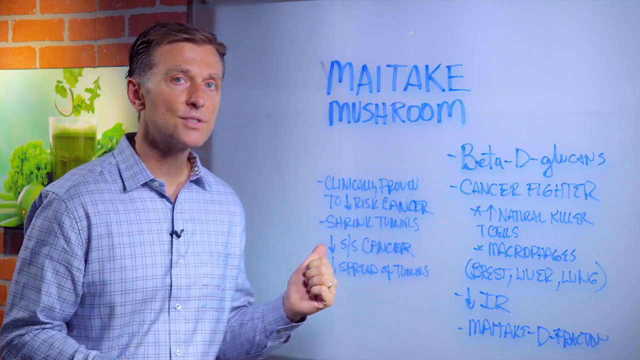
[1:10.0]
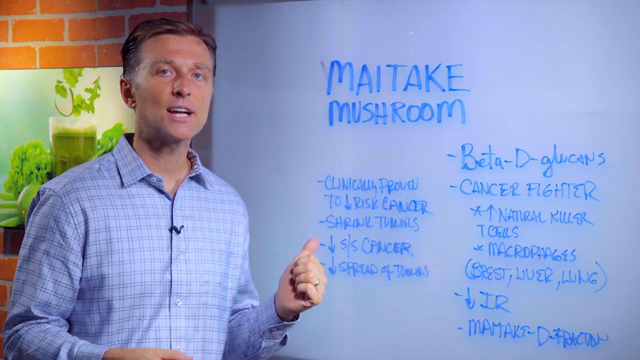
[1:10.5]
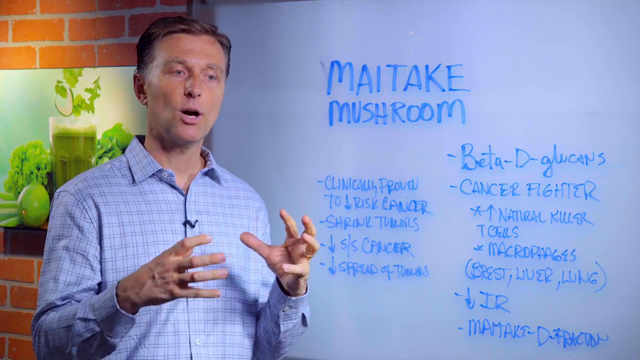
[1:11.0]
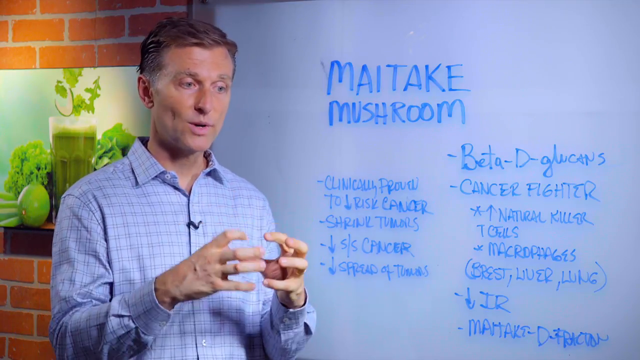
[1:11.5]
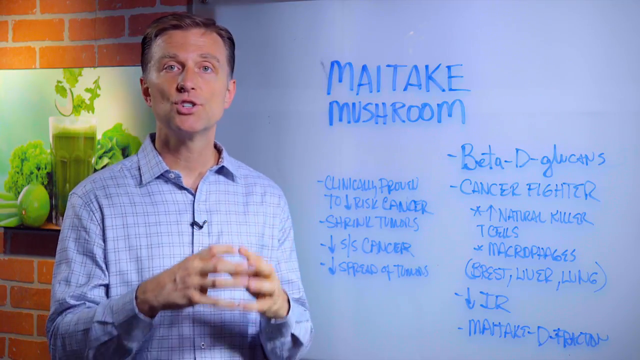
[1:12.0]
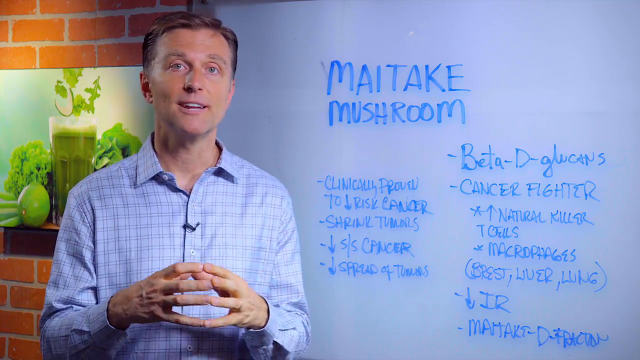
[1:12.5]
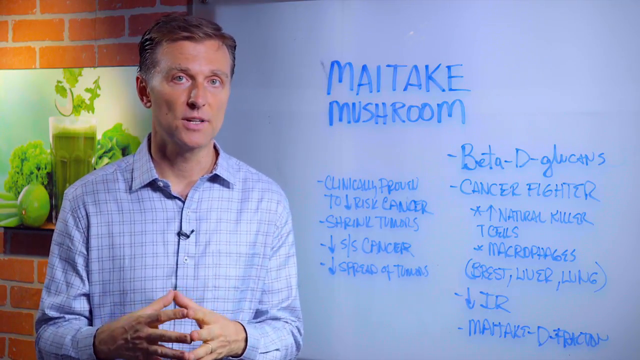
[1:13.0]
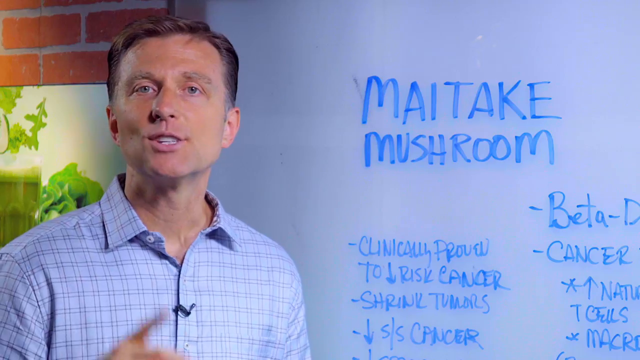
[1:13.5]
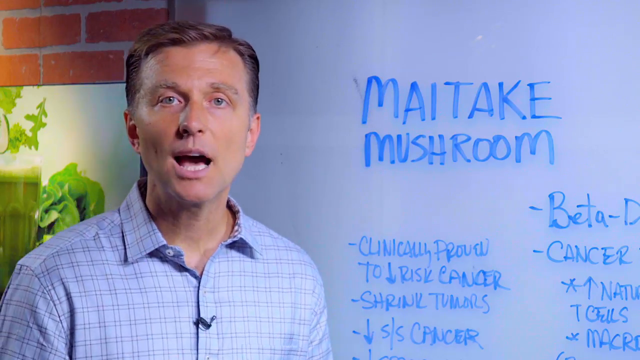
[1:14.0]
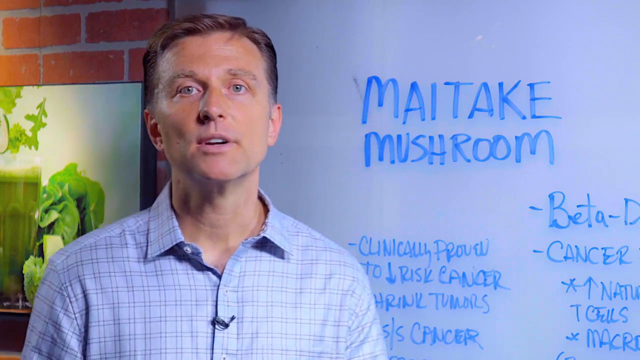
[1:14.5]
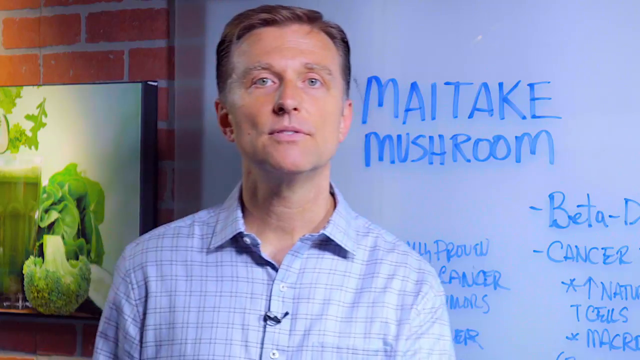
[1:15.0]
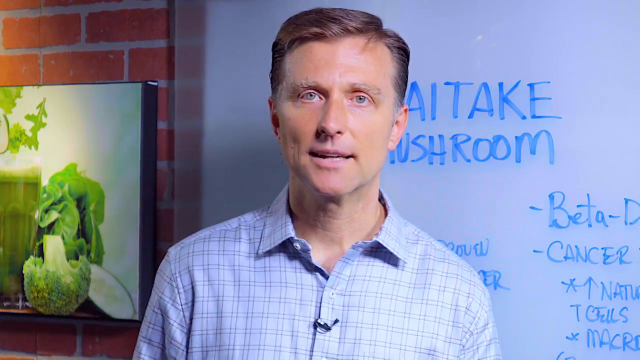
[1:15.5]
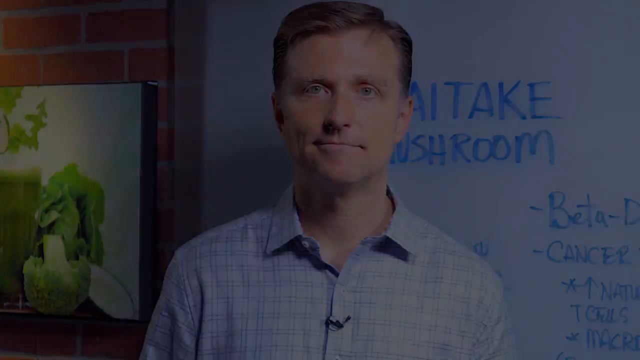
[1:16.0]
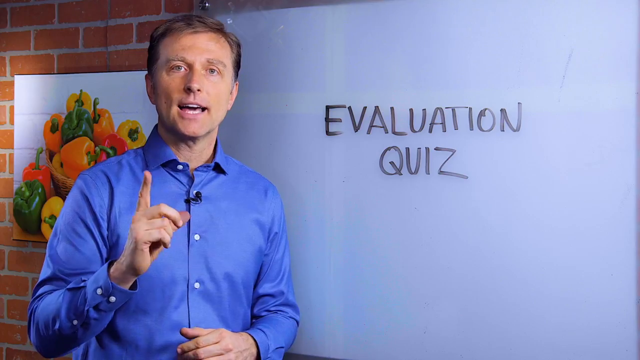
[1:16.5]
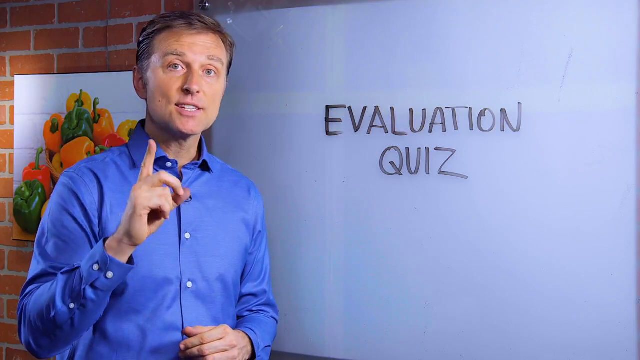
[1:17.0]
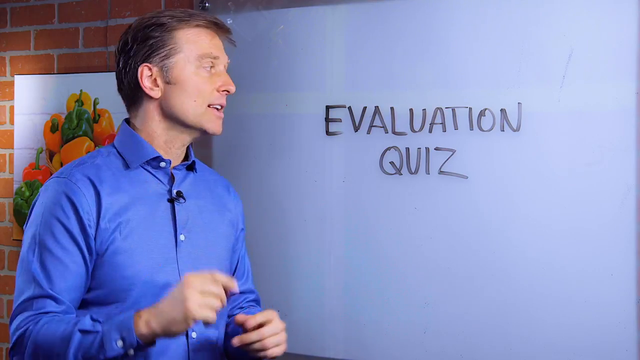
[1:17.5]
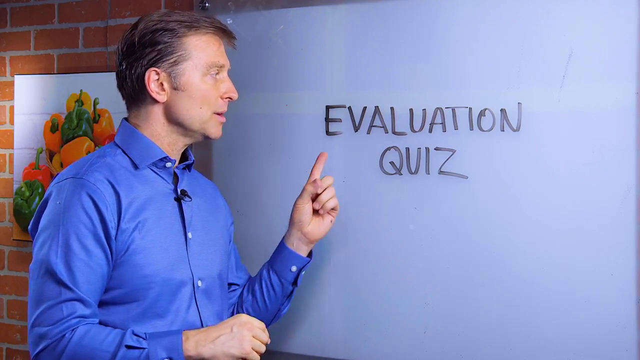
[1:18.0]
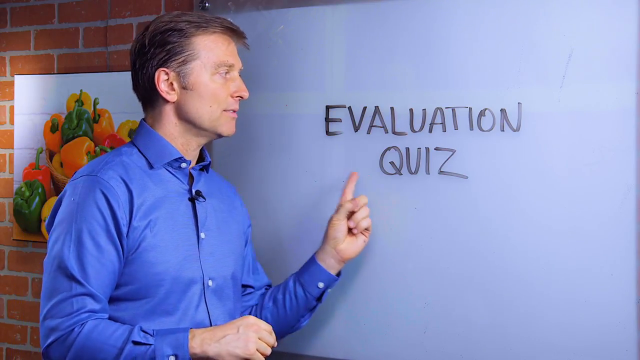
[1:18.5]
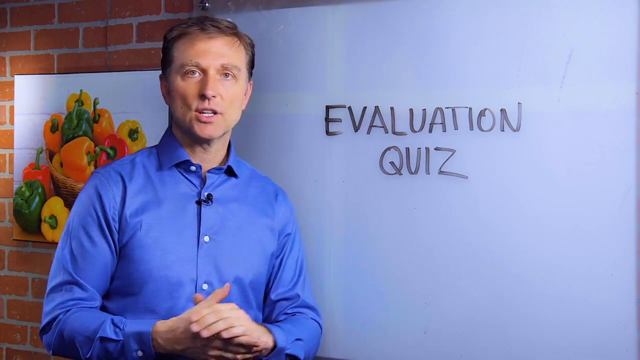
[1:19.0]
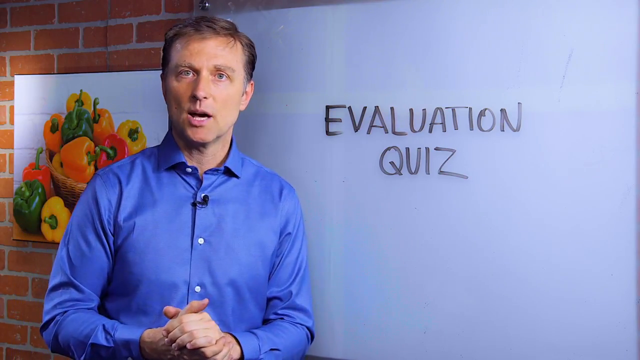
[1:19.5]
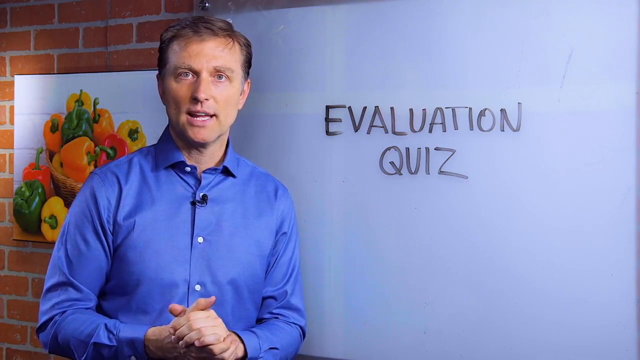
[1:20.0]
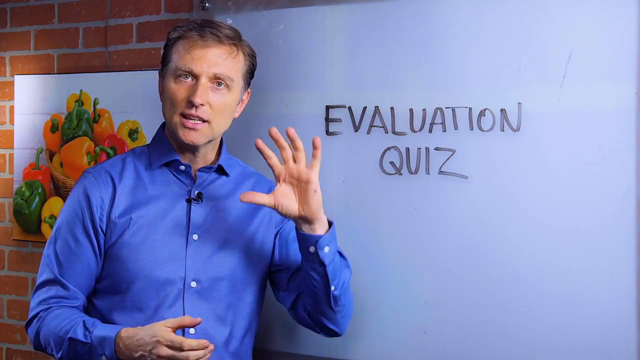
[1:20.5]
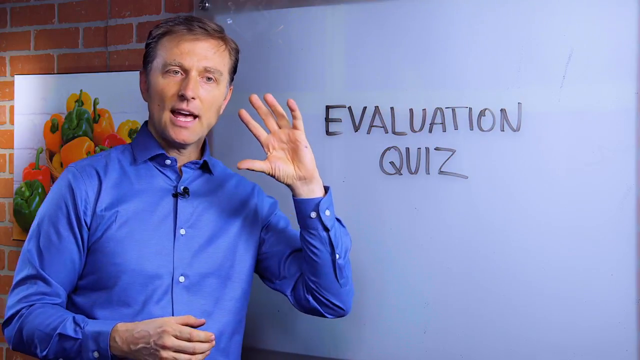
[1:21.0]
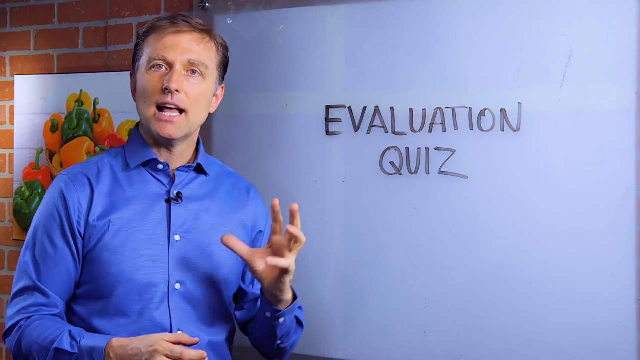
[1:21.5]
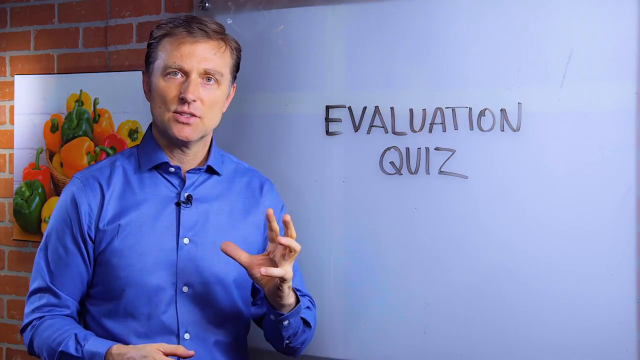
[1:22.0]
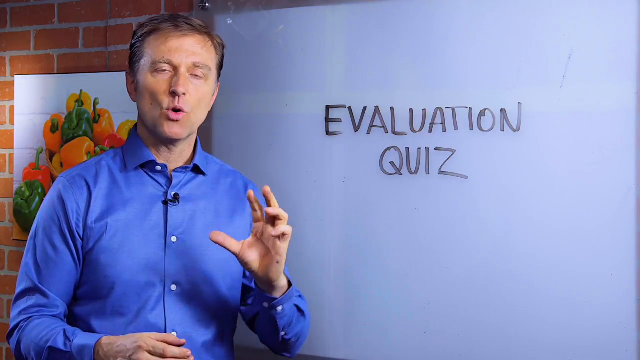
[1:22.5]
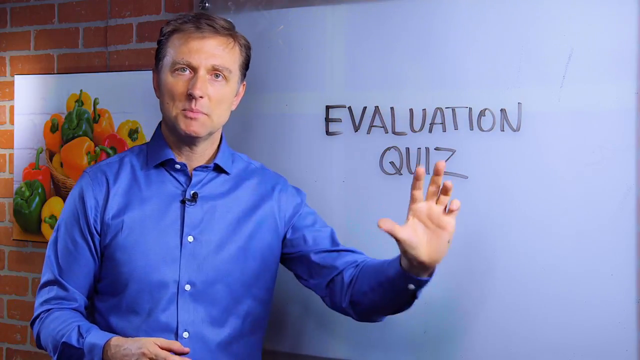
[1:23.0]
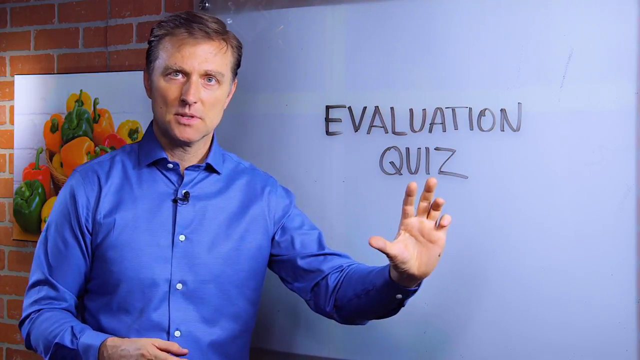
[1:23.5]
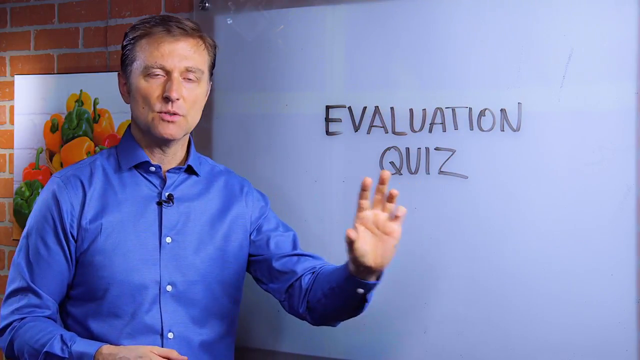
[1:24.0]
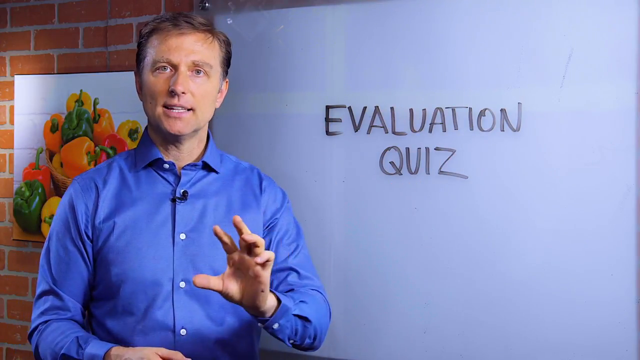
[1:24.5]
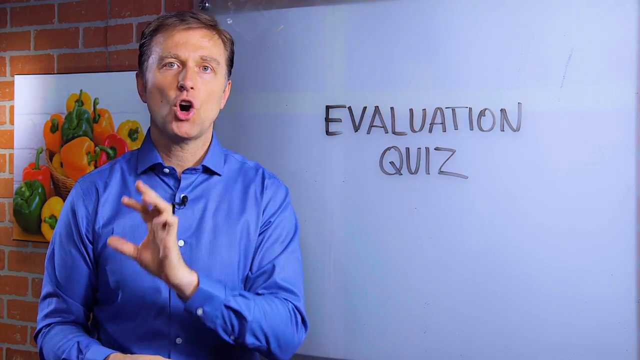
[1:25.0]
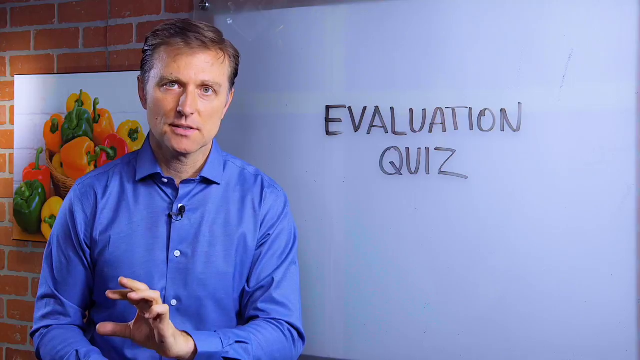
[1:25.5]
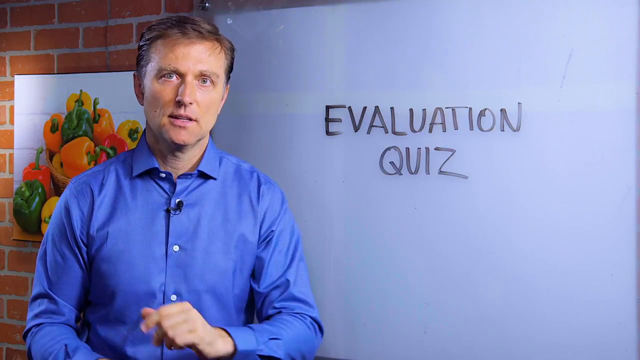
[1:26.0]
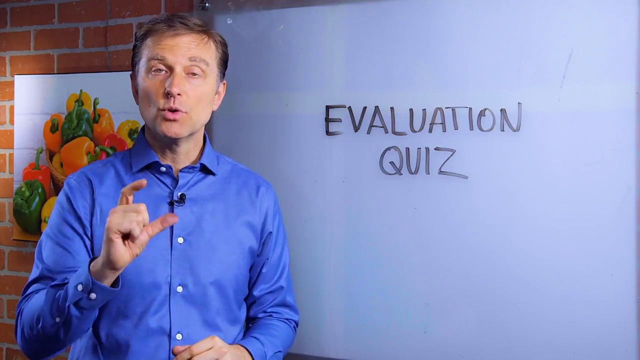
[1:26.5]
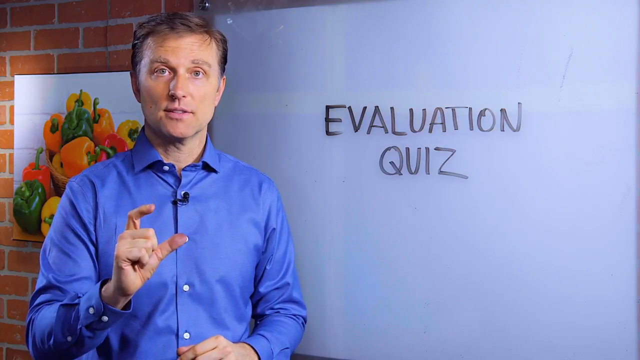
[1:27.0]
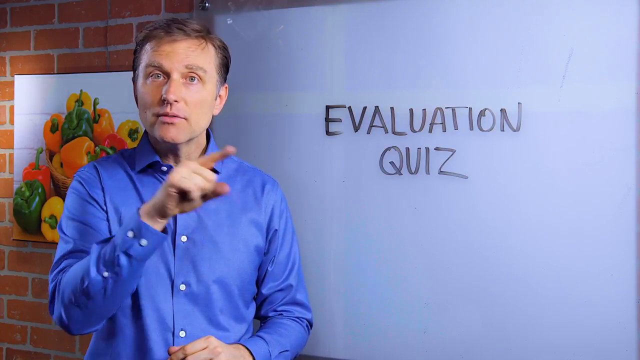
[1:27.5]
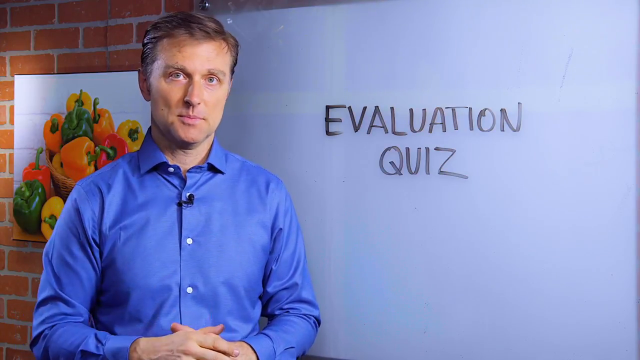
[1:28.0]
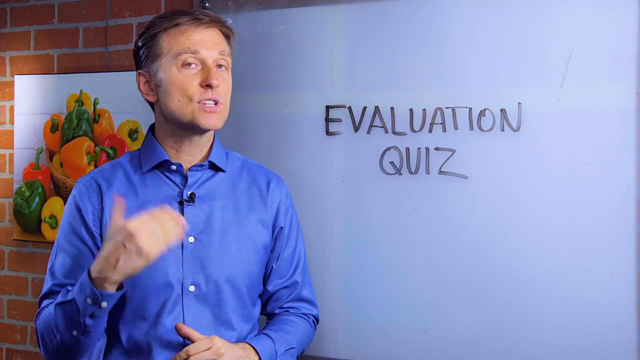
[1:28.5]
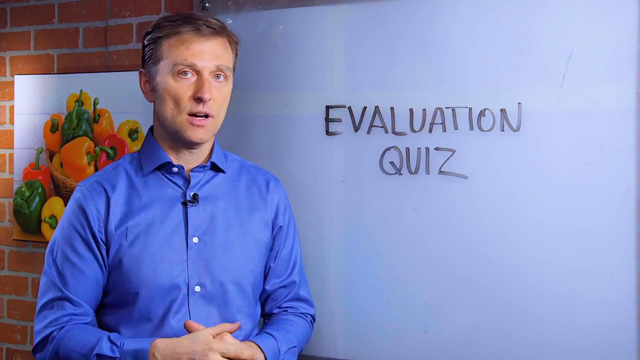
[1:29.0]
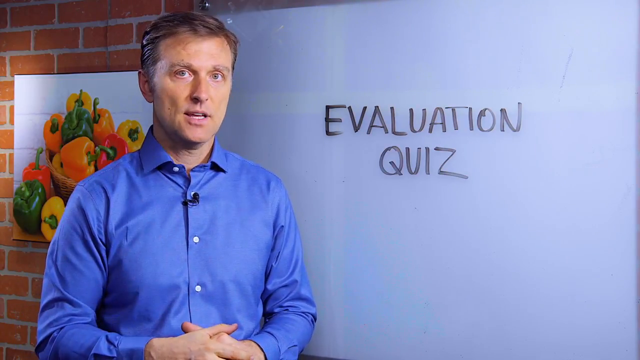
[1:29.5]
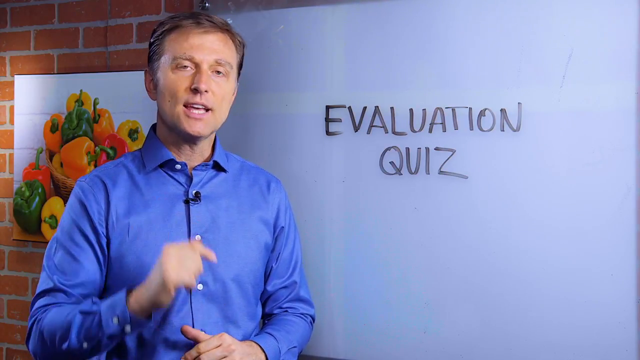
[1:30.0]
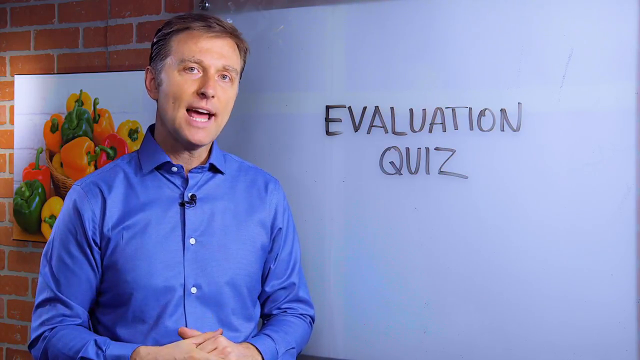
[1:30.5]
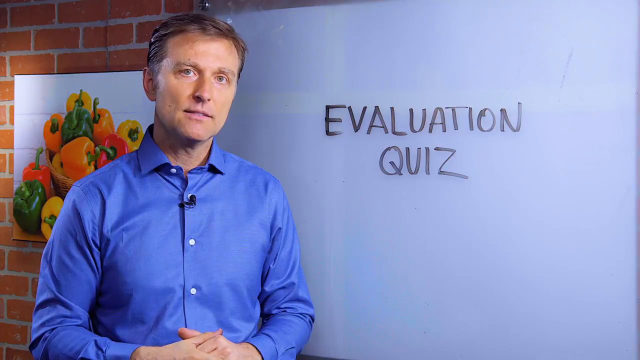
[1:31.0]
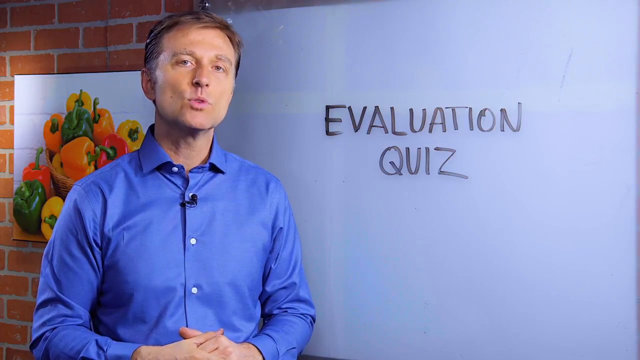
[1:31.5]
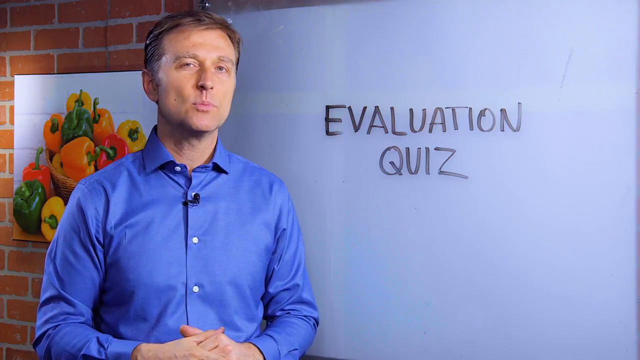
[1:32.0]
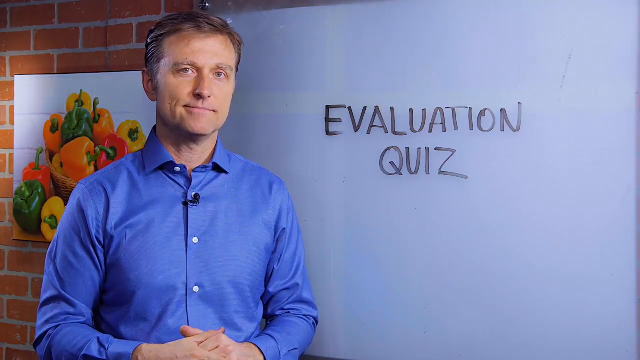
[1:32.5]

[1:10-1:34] The man continues speaking to the camera. He makes a gesture with both hands in which the fingers of each hand touch in the middle, so both hands look evenly interlocked. He places his hands down and the camera zooms in on him again as he keeps talking. The next screen shows the same man in a different shirt, a blue button-up shirt, and the whiteboard now says "evaluation quiz" in black text, with all the previous words gone. He points at the title with his left pointer finger, then interlocks his hands again near his stomach area. Still talking, he raises his left hand, makes a claw-like shape with it, puts his hand outward just under the title, and moves it twice. He keeps speaking into the camera until a black closing screen appears.